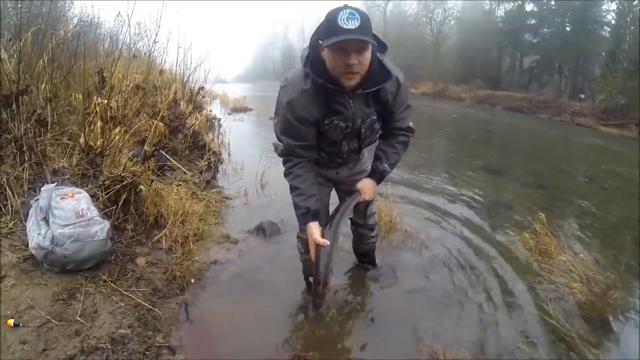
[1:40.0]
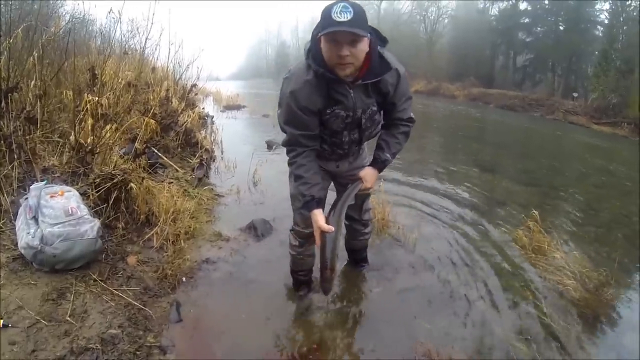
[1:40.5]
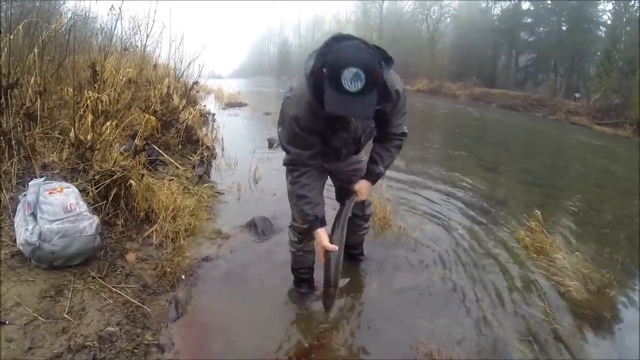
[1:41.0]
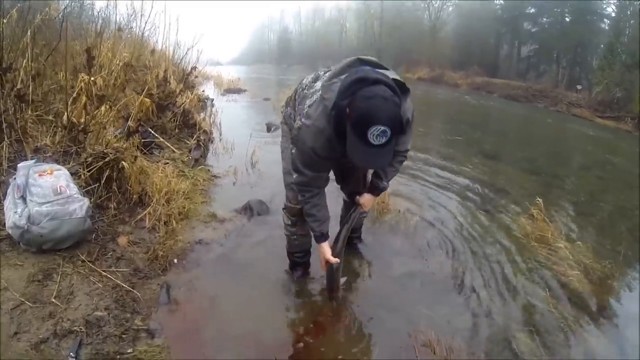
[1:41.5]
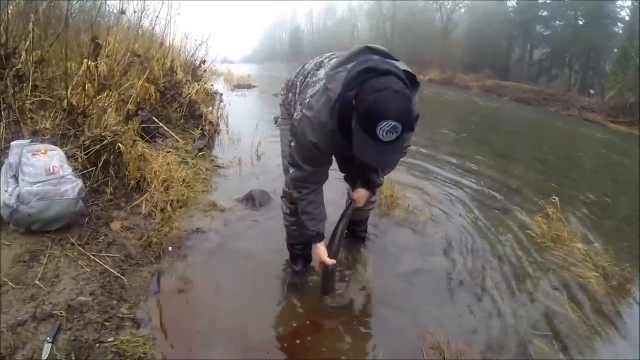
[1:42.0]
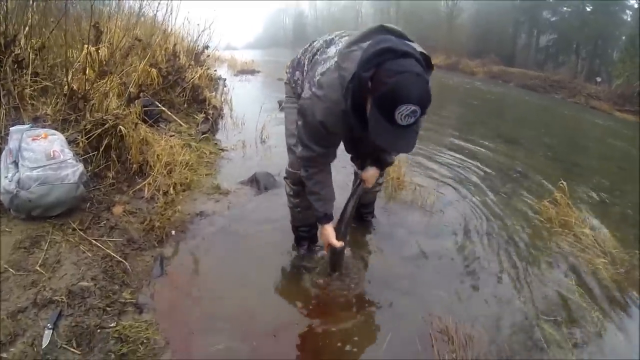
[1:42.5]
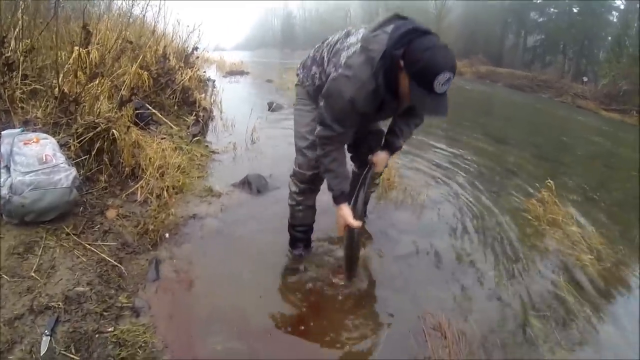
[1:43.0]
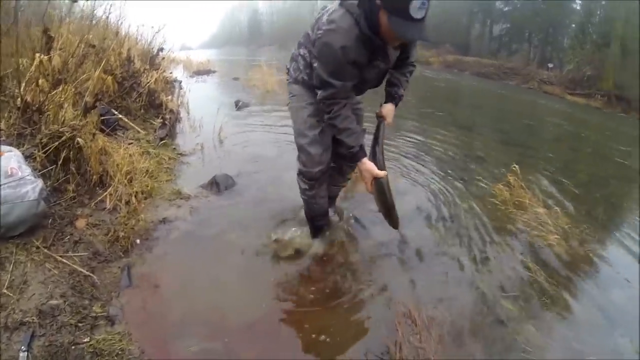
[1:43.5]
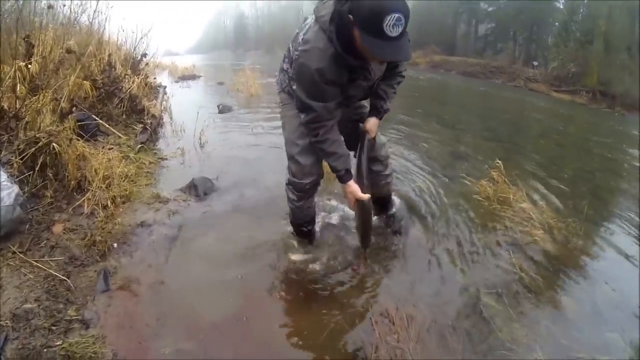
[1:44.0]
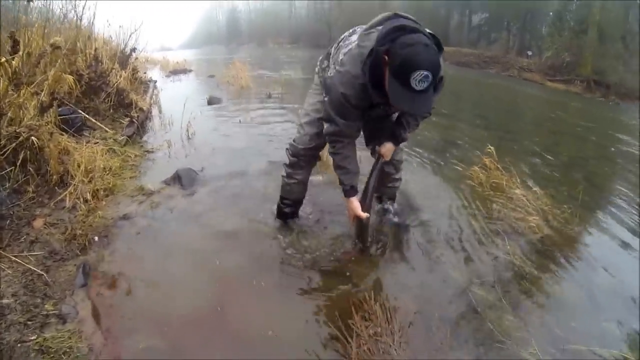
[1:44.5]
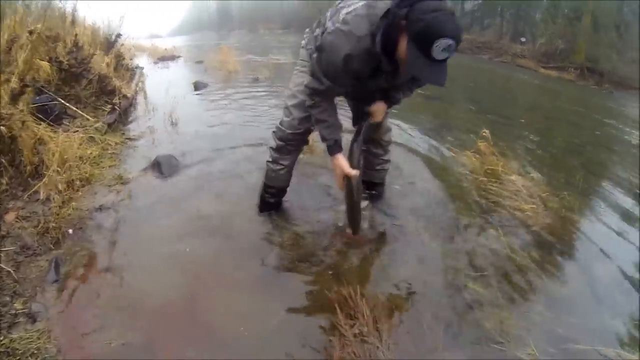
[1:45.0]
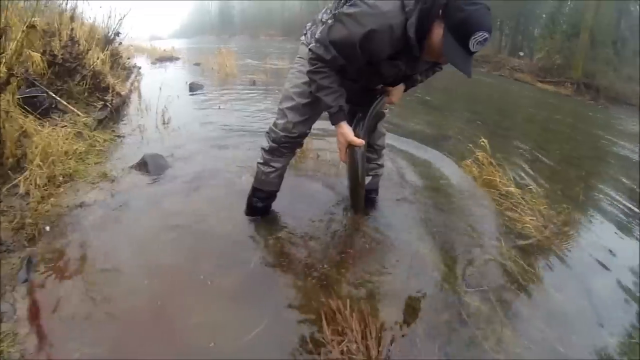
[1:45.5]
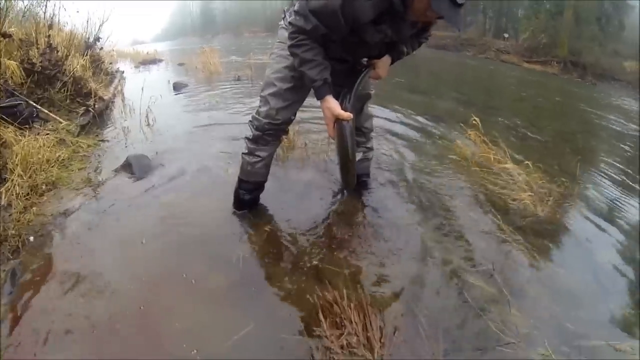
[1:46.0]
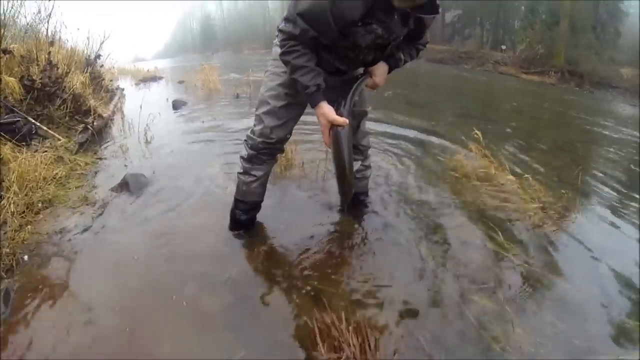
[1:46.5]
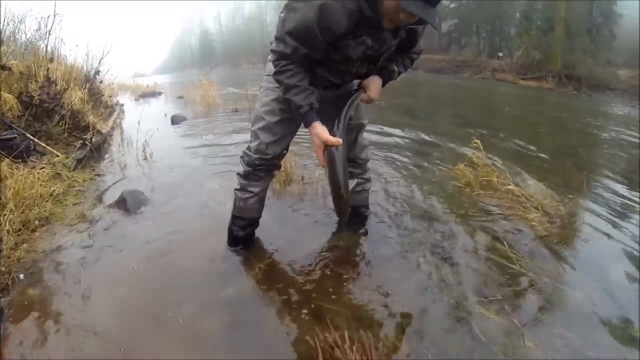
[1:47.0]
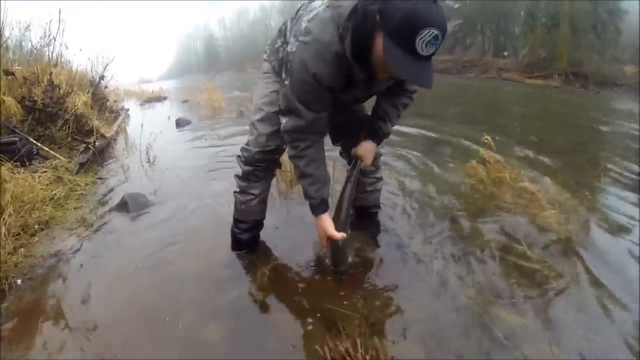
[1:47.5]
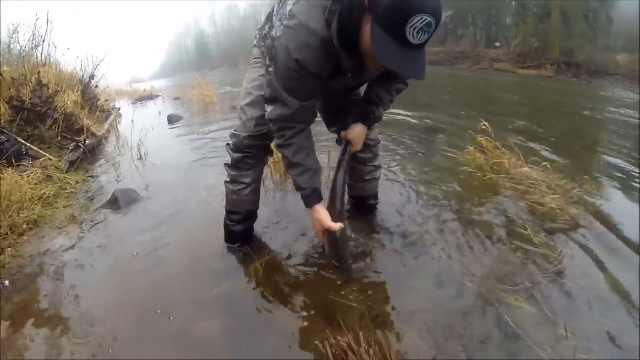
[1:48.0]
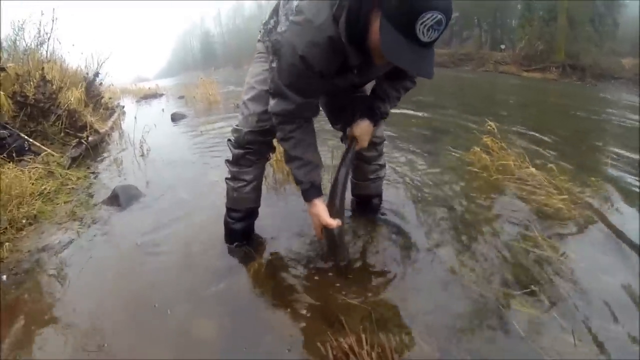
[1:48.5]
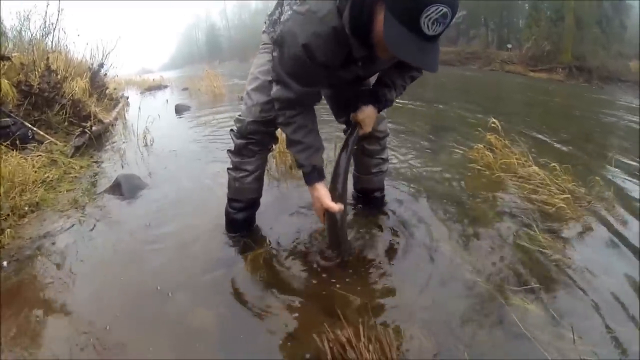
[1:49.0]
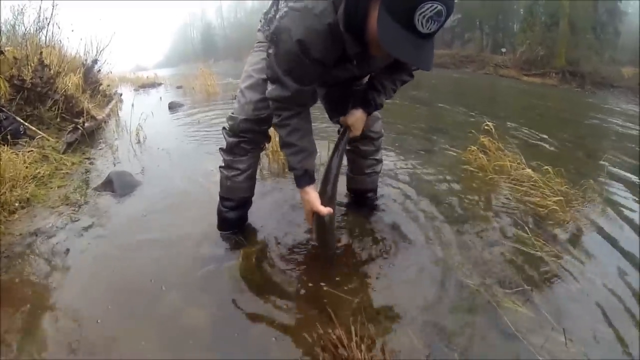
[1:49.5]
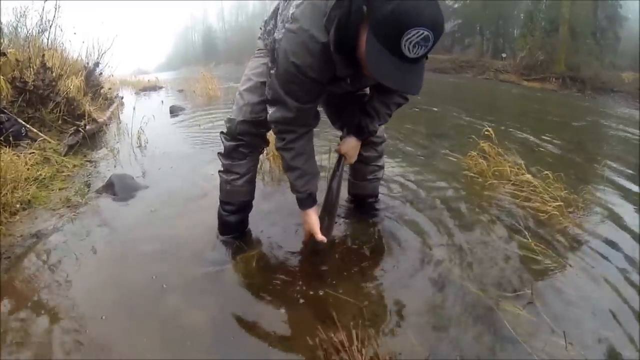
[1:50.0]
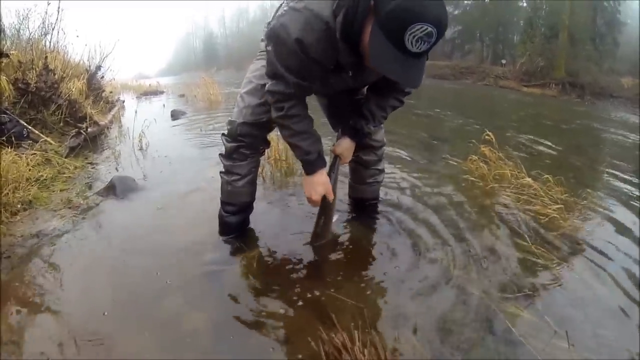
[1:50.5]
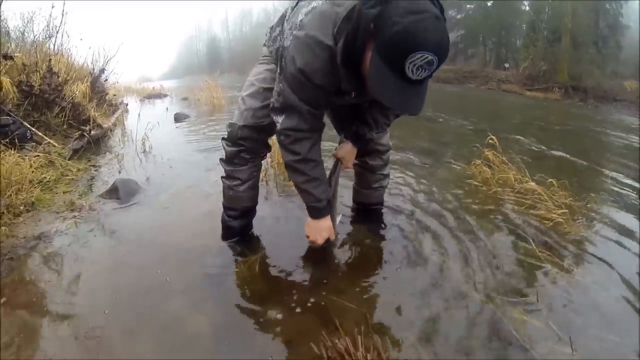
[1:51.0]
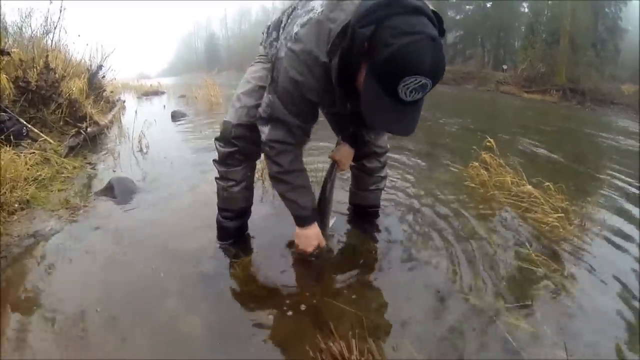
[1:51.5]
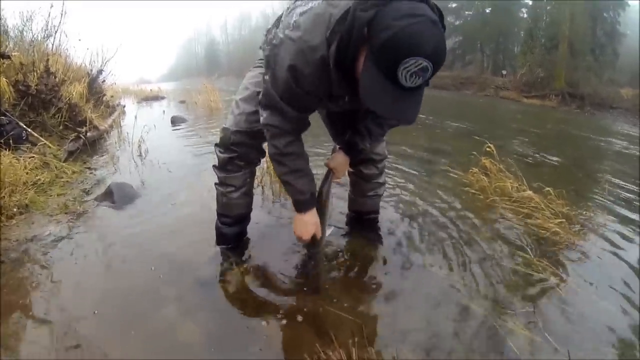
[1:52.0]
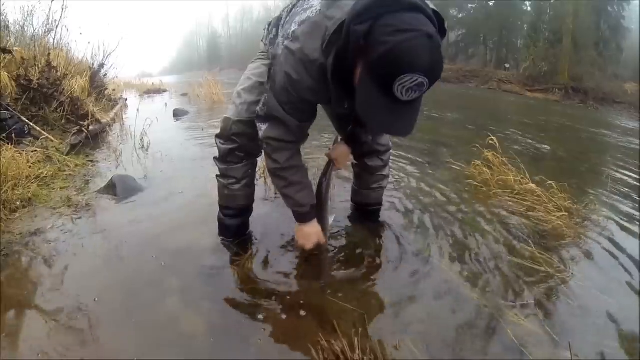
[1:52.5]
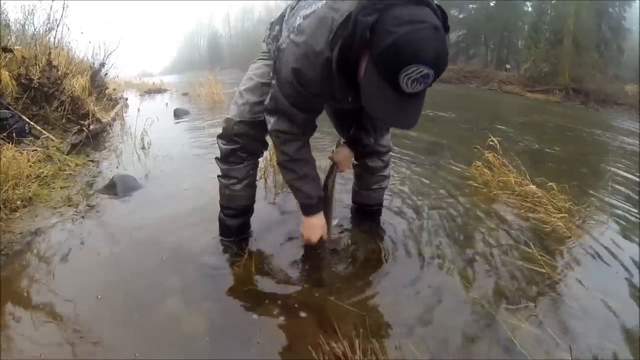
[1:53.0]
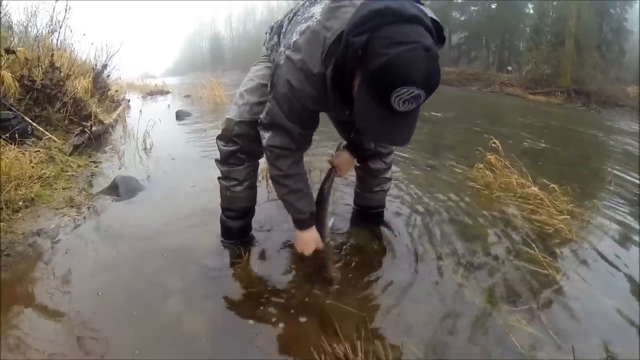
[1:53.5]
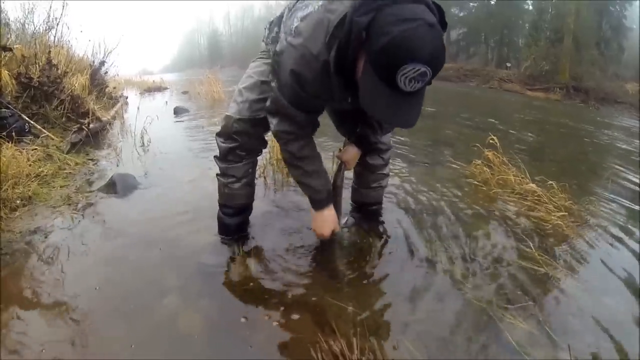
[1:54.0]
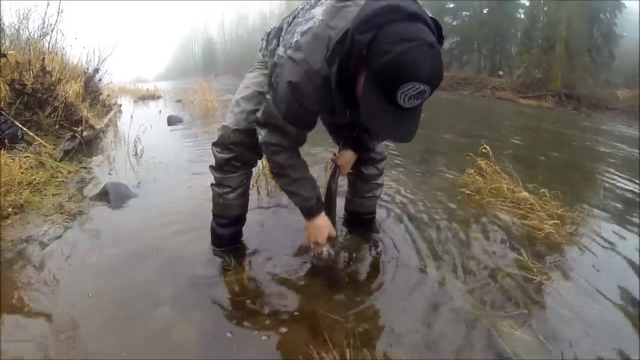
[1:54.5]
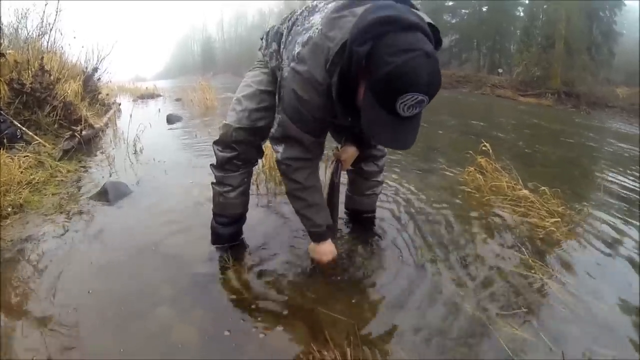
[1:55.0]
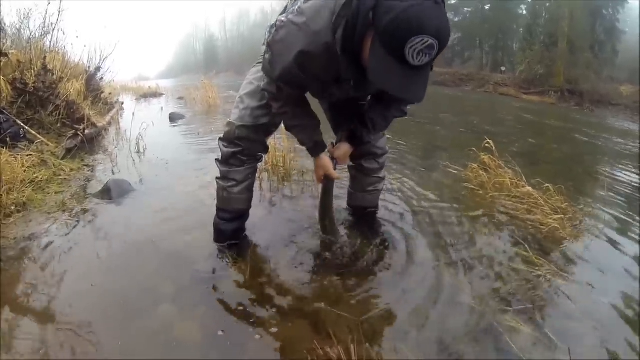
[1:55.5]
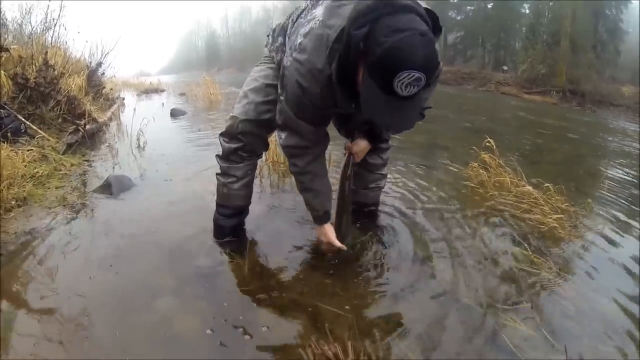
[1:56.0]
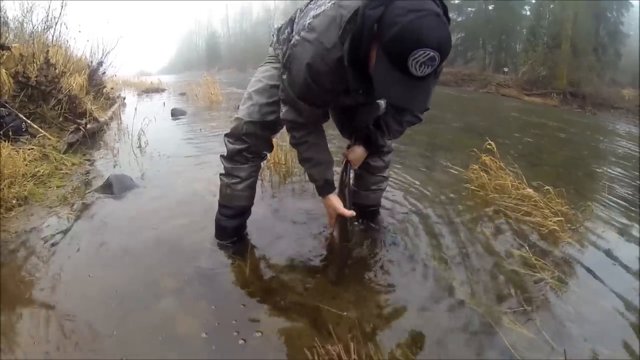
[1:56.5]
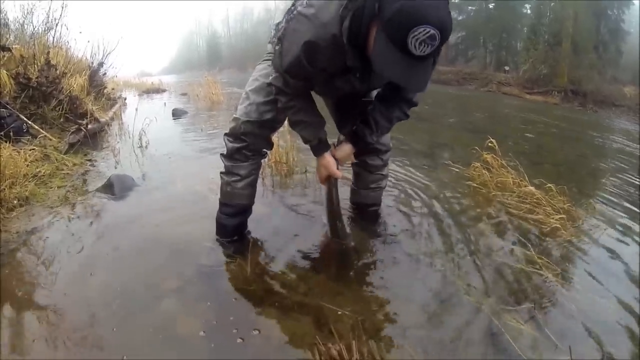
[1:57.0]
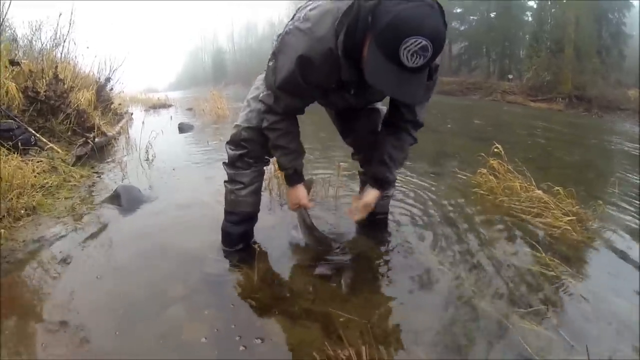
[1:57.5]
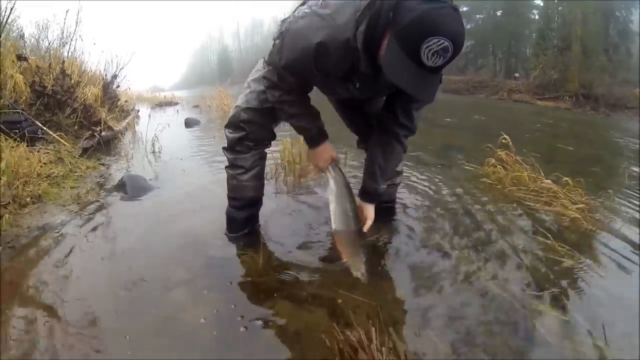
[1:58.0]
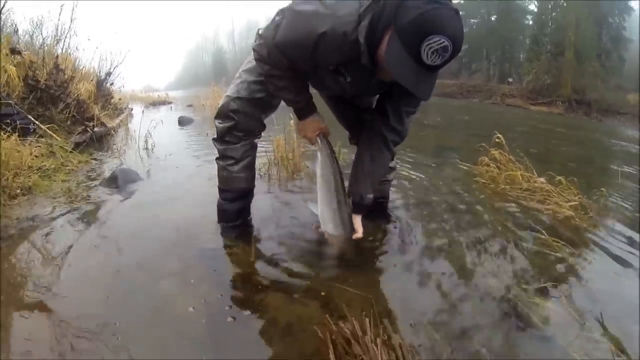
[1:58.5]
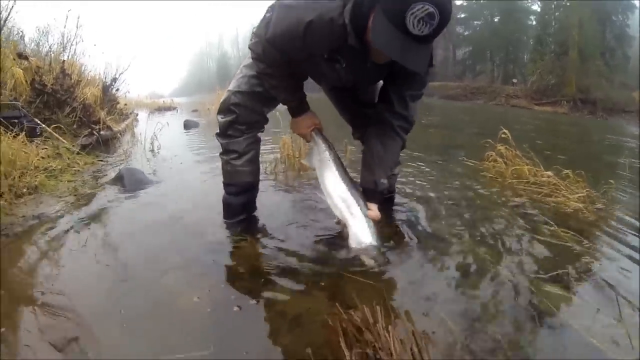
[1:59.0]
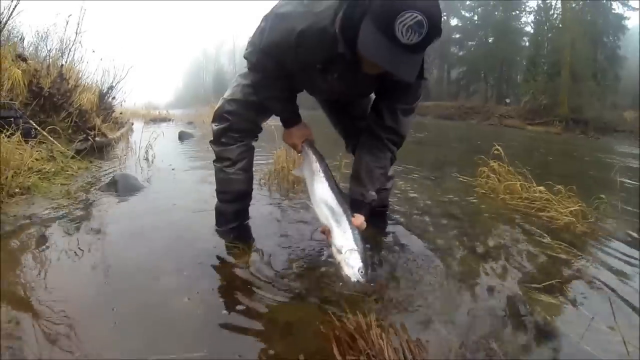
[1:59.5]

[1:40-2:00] Still talking to the camera with the fish in his hands, the man moves a little further into the river, where the water is about four inches deep, and dunks the fish several times. Holding the fish in his left hand, he runs his right hand down it like a squeegee, as though squeezing water or fluids out of the fish into the river. He then switches to holding the fish in his right hand and lifts it a little with his left so its silvery side faces the camera. He looks at the camera multiple times, apparently giving directions. Ripples spread in the water as the fish is dunked in and out and as he moves about; he is maybe two feet, or perhaps 18 inches, out from the bank.